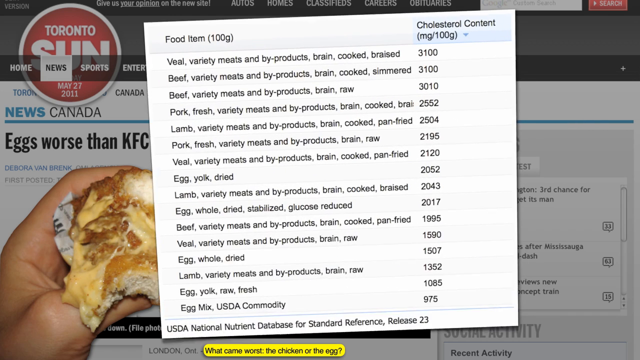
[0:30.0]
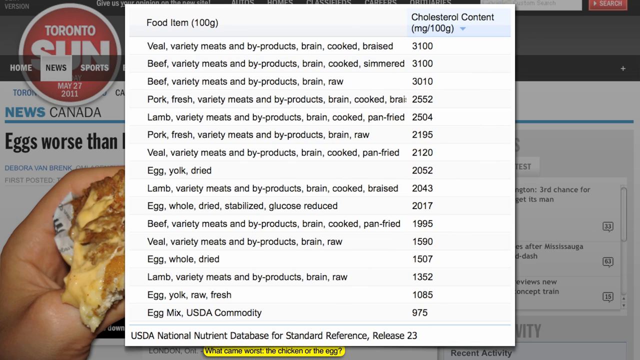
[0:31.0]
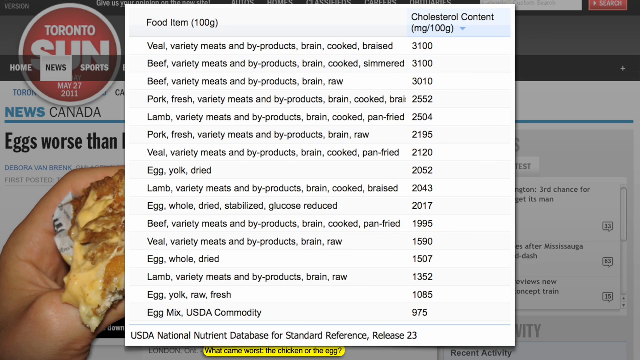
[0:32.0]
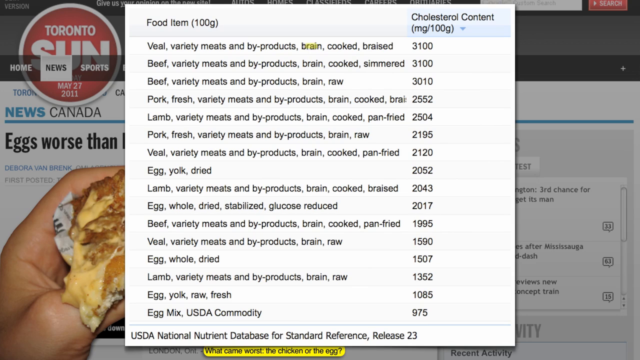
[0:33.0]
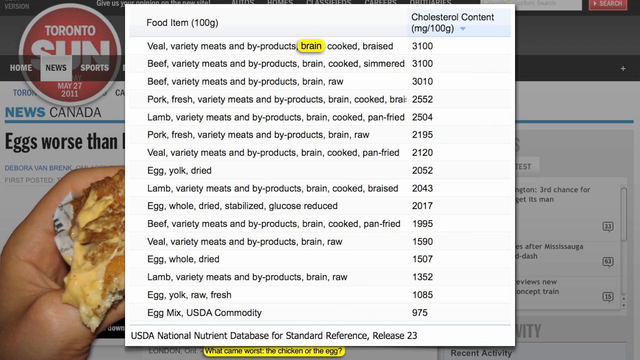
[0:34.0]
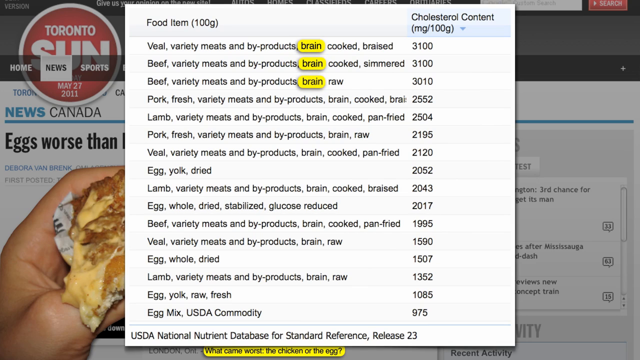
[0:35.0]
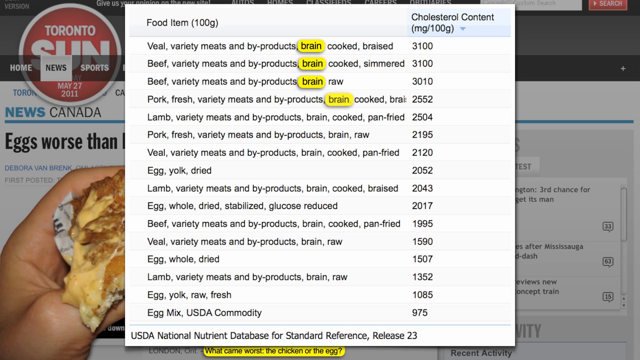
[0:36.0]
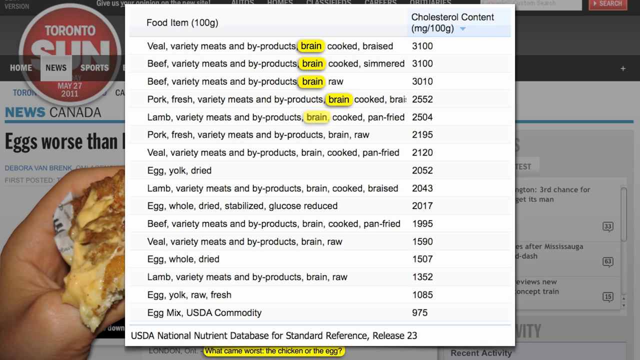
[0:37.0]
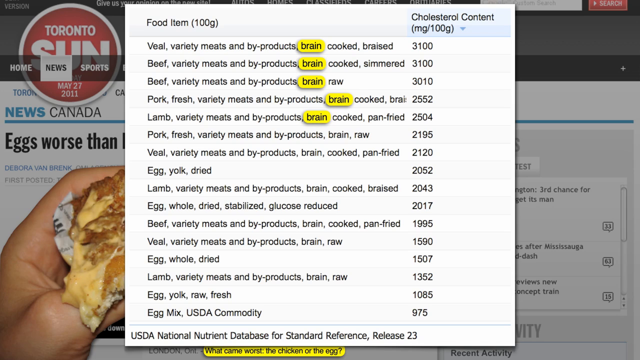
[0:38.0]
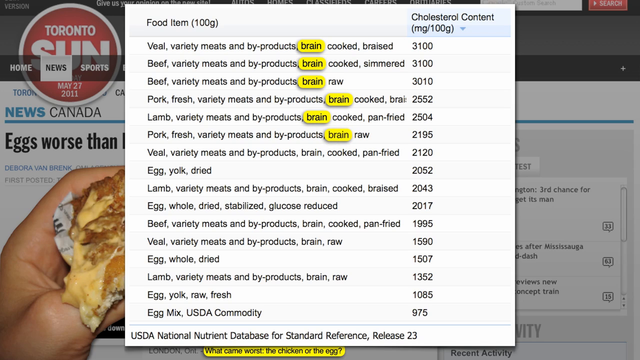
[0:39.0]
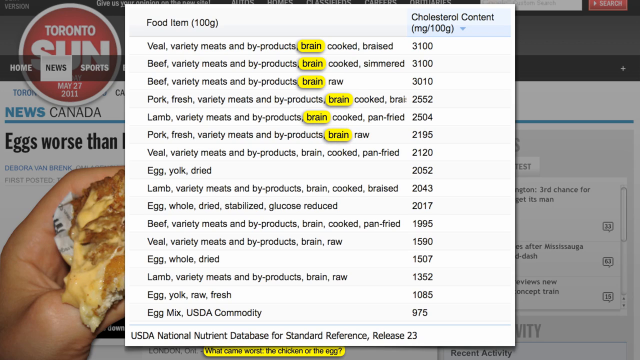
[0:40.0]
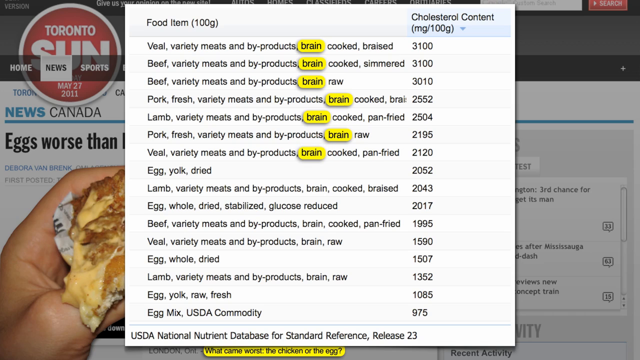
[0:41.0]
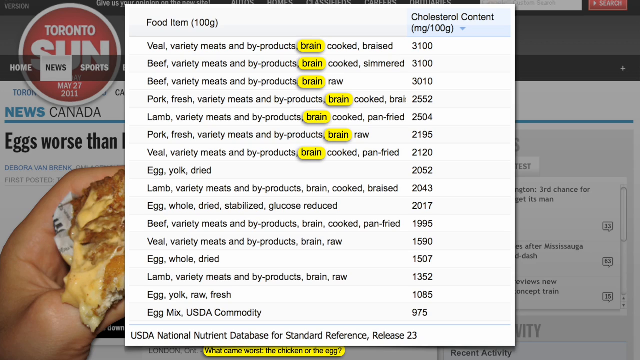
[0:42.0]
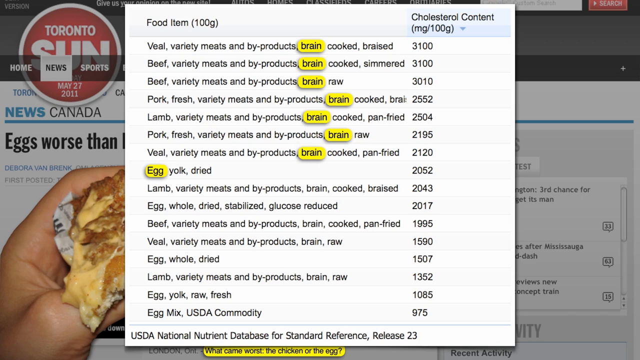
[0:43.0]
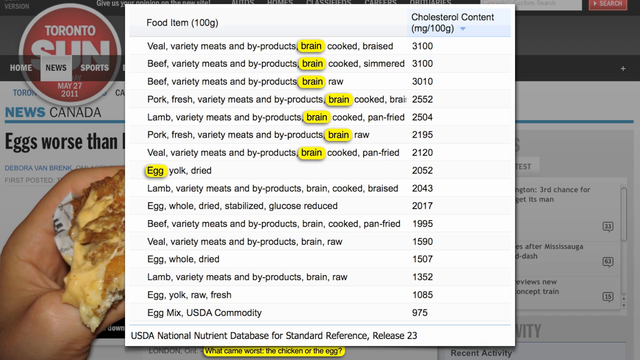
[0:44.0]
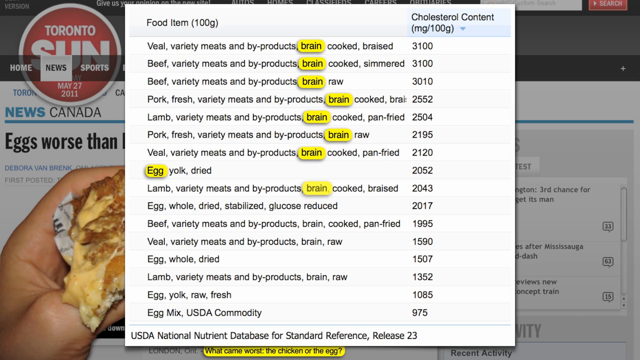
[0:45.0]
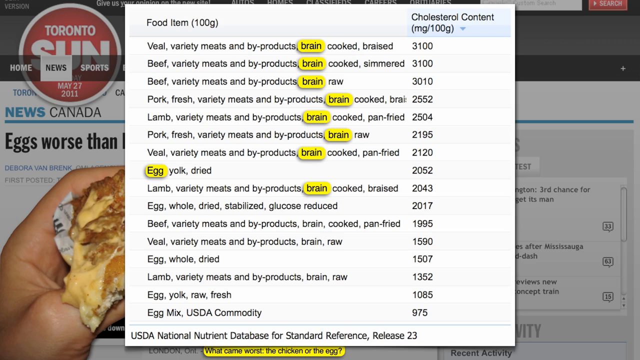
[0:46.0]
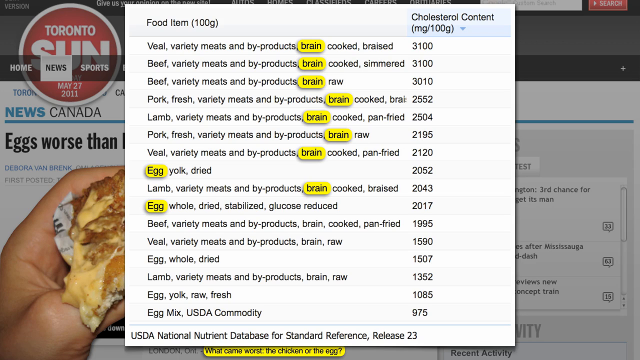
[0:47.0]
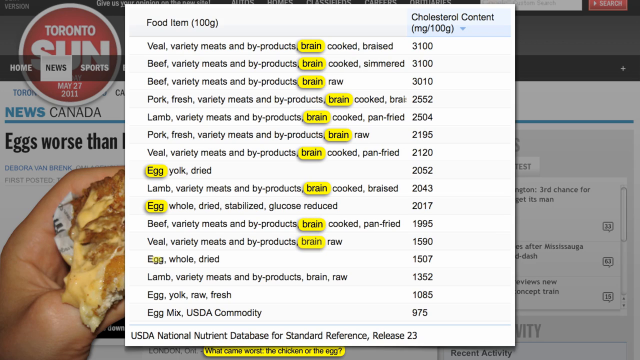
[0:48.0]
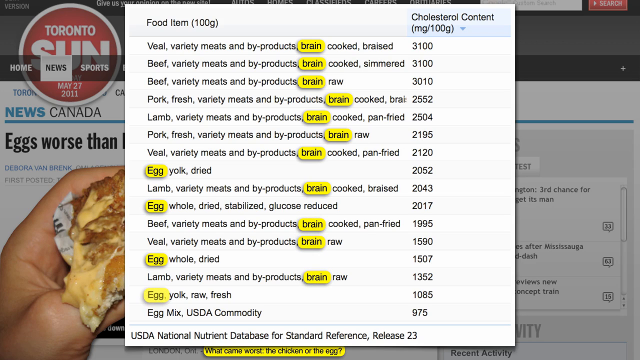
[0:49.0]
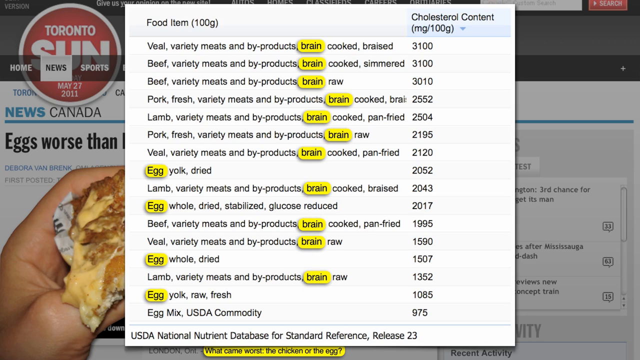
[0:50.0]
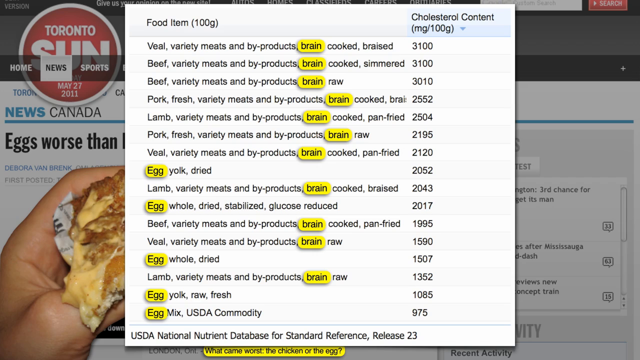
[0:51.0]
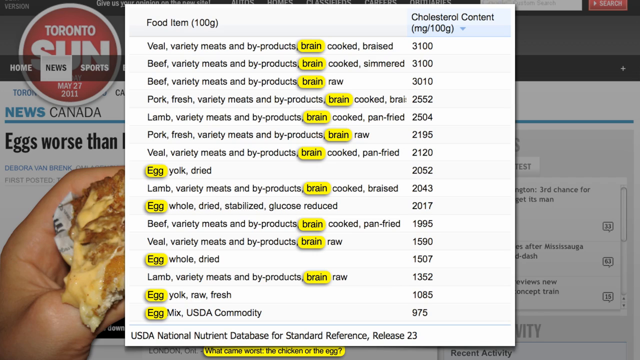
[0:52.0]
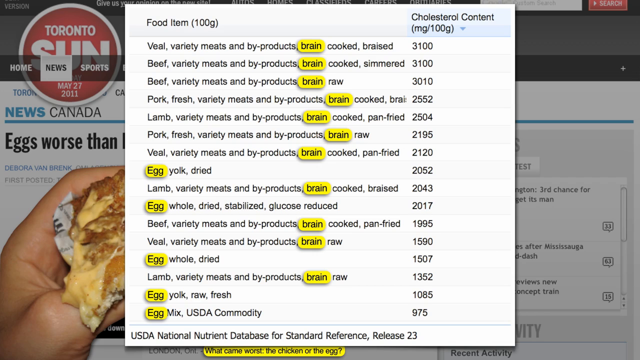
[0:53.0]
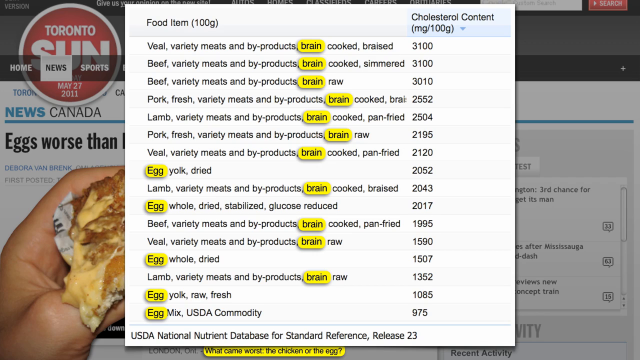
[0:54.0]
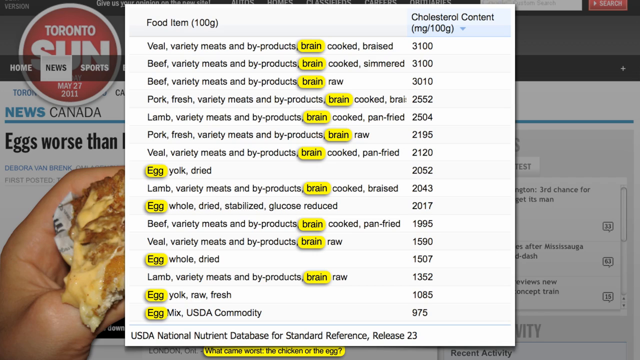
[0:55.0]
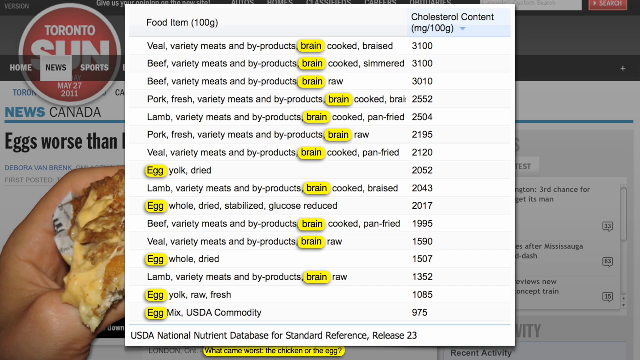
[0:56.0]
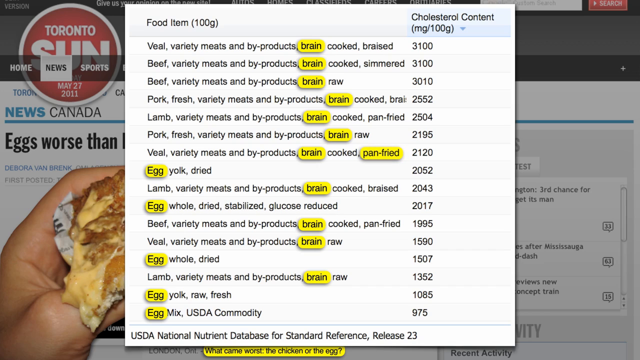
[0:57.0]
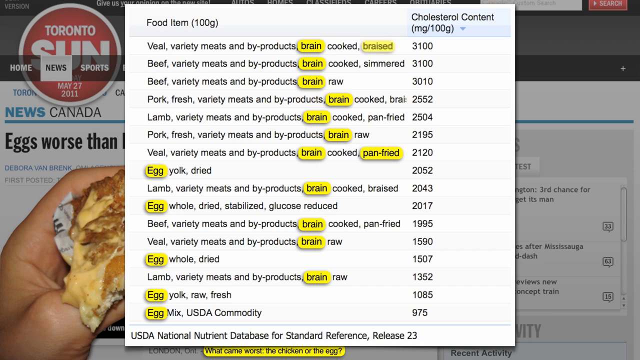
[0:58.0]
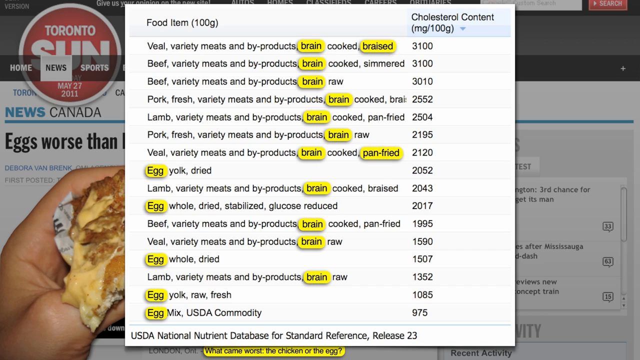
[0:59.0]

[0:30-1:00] A large white sheet that fills the middle 75% of the screen pops up, listing food items per 100 grams with their cholesterol content in milligrams per 100 grams on the right-hand side. The list seems to be sorted from highest to lowest, with the highest value 3100 milligrams per 100 grams and the lowest 975 milligrams per 100 grams. Foods such as veal, beef, pork, lamb and eggs make up the list of 16 items, which are all variations of these foods in different meals. Yellow circular boxes appear one by one from top to bottom, highlighting the word "brain" as they move down the list. Seven brains in a row are highlighted. On the eighth row, which has no brain, the word "egg" on the left-hand side of the sheet is highlighted in yellow. On row nine, "brain" is highlighted again, and the highlighting continues down the list, marking either brain or egg on each line for all 16 food items.